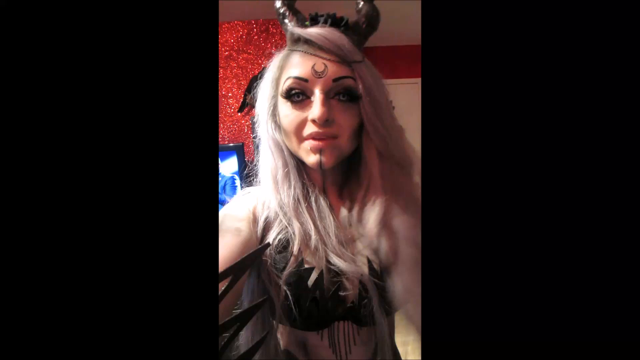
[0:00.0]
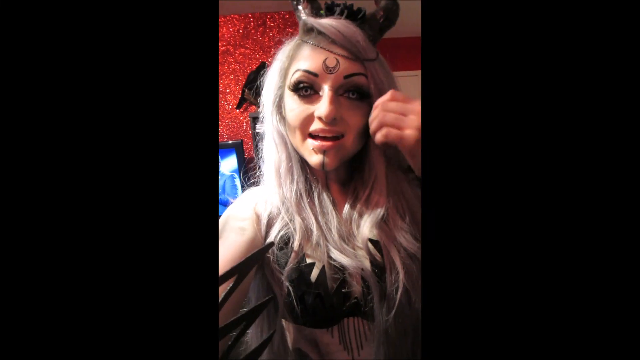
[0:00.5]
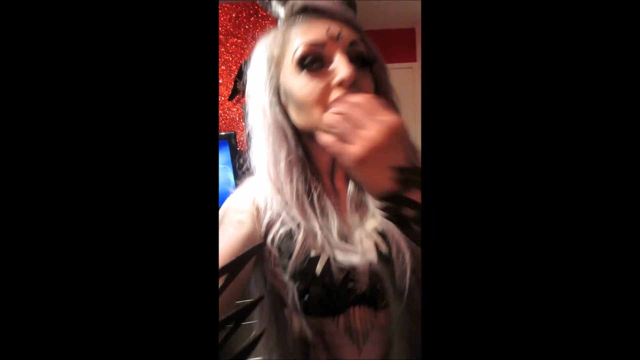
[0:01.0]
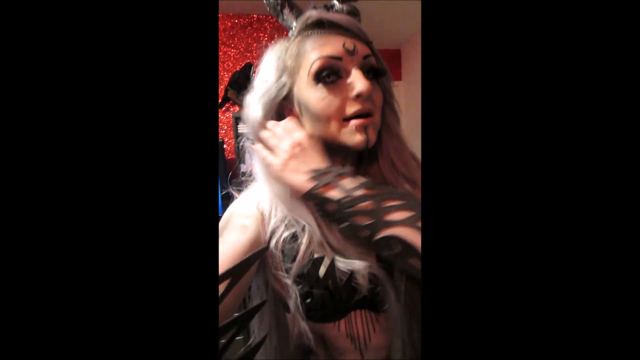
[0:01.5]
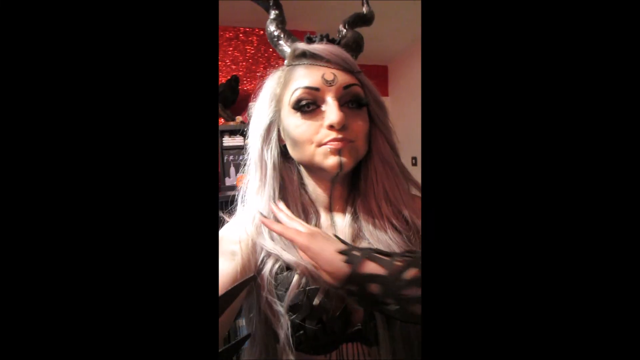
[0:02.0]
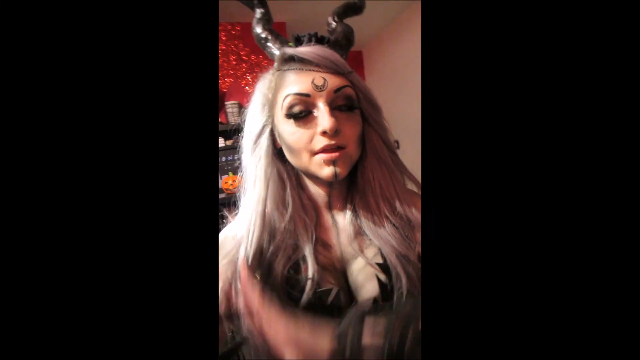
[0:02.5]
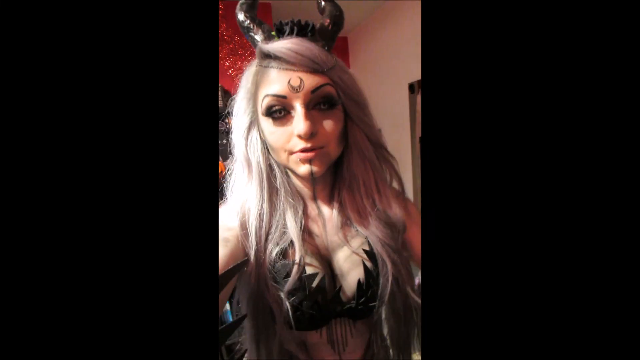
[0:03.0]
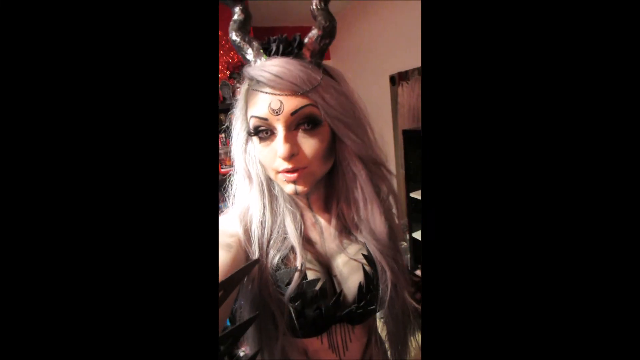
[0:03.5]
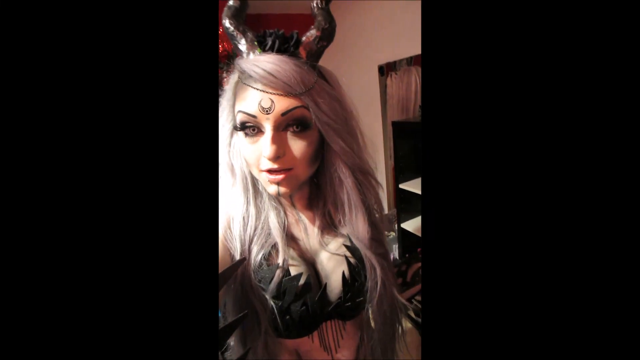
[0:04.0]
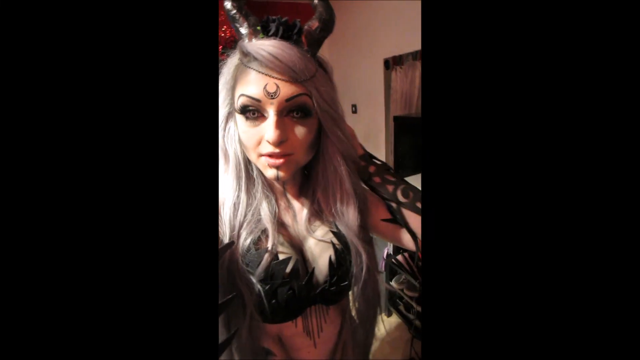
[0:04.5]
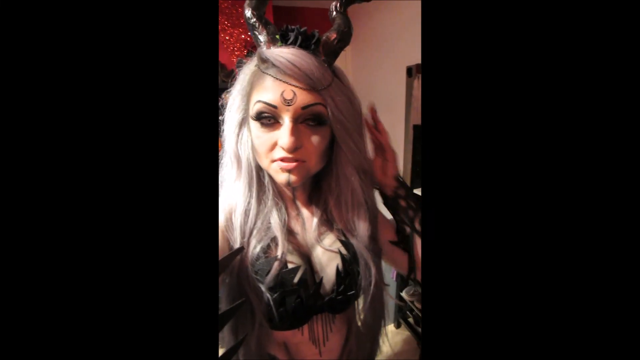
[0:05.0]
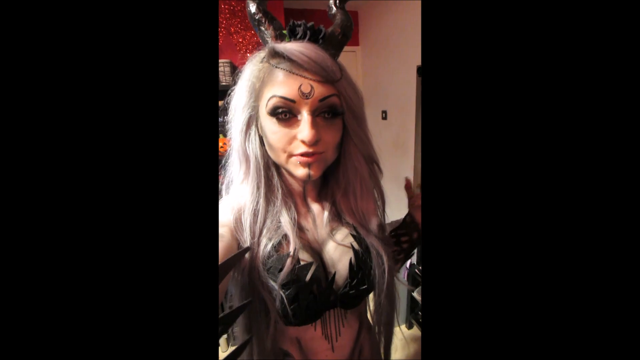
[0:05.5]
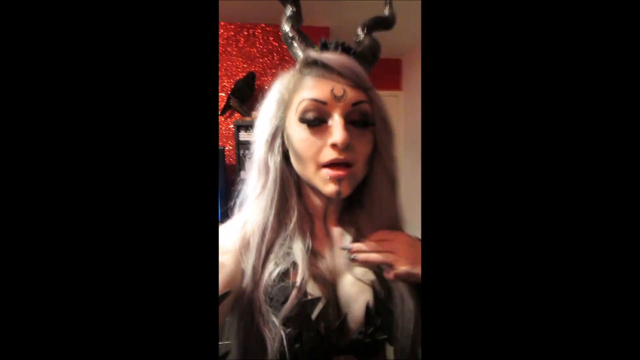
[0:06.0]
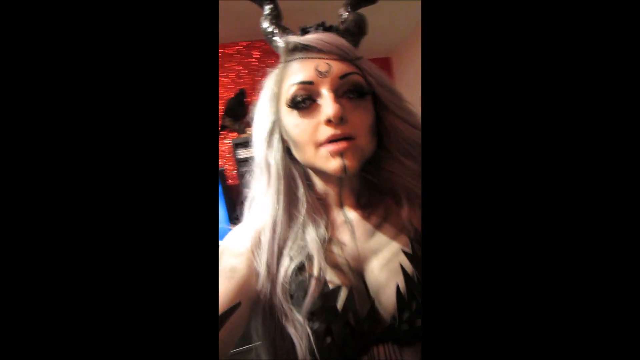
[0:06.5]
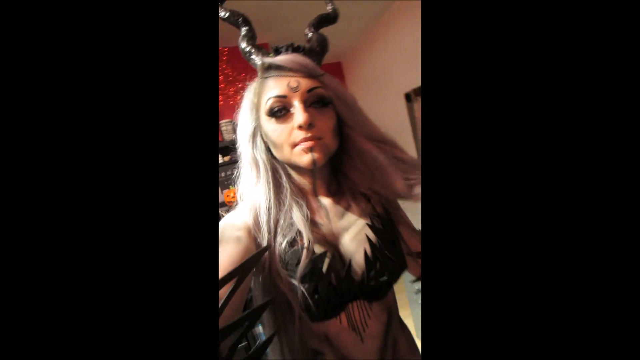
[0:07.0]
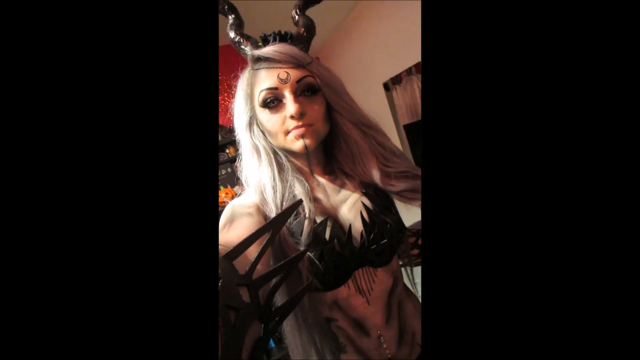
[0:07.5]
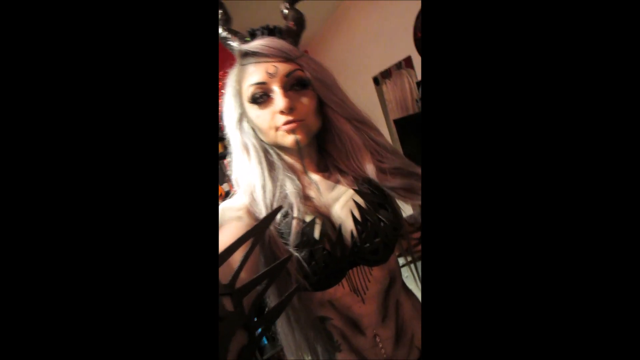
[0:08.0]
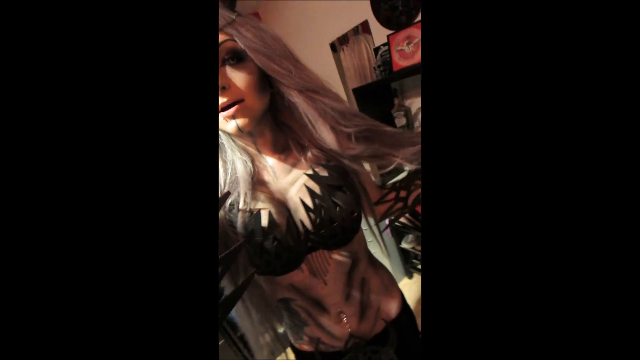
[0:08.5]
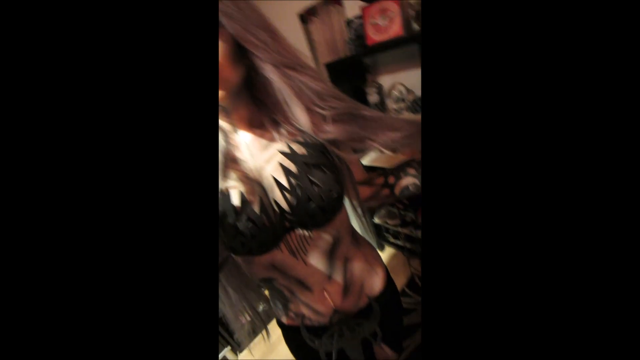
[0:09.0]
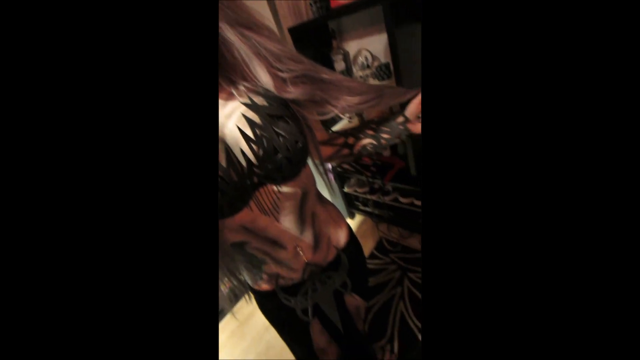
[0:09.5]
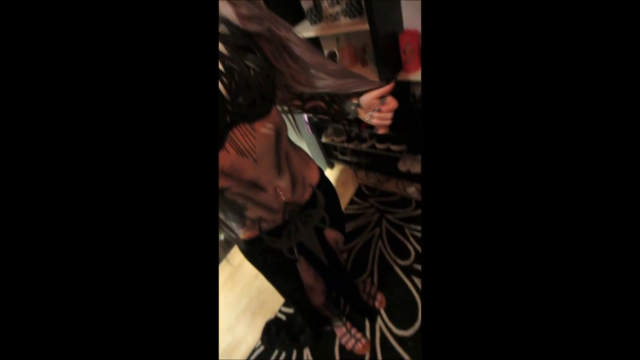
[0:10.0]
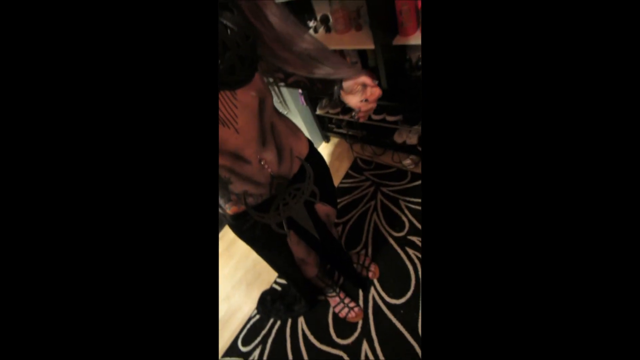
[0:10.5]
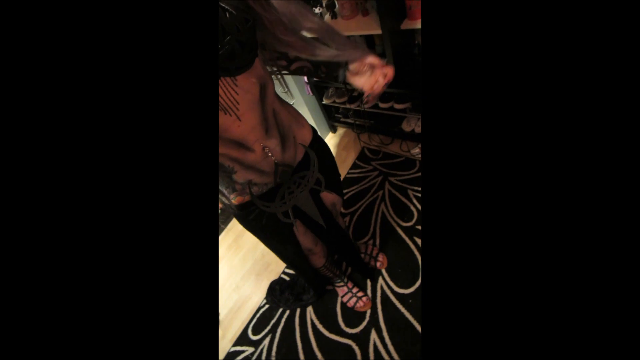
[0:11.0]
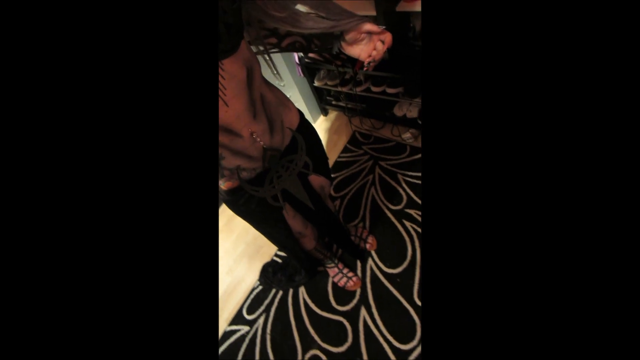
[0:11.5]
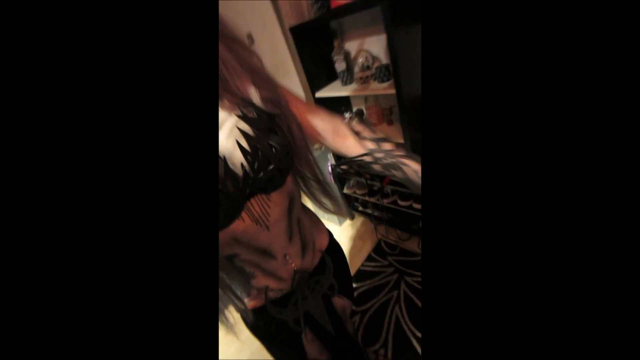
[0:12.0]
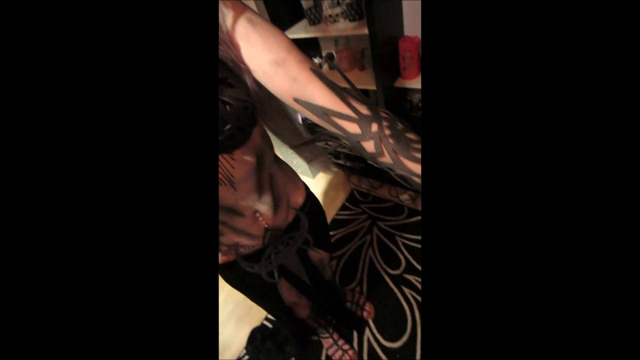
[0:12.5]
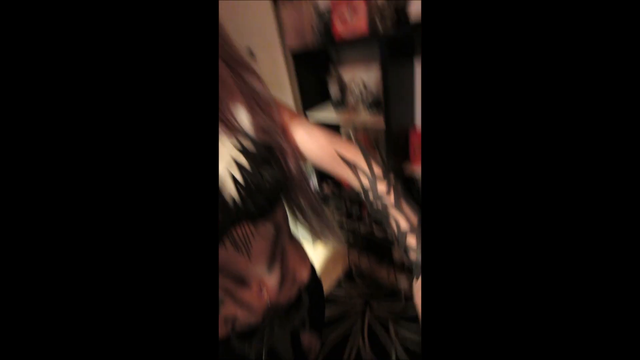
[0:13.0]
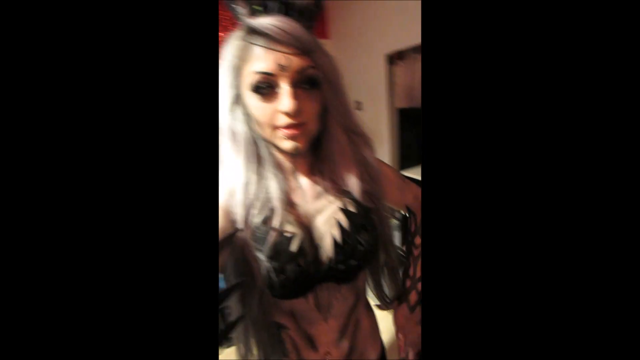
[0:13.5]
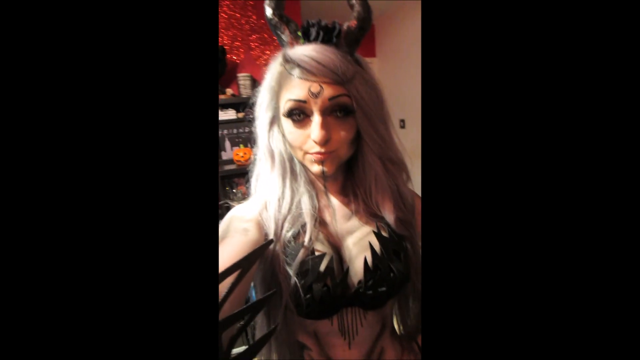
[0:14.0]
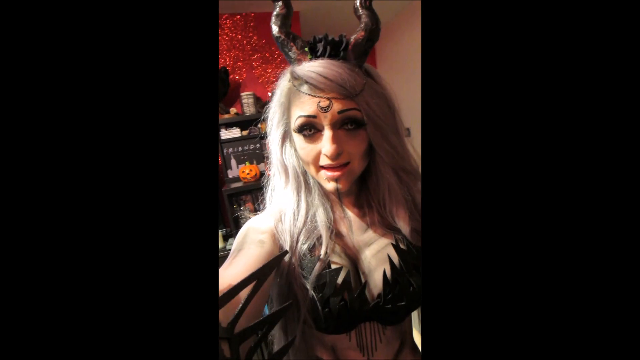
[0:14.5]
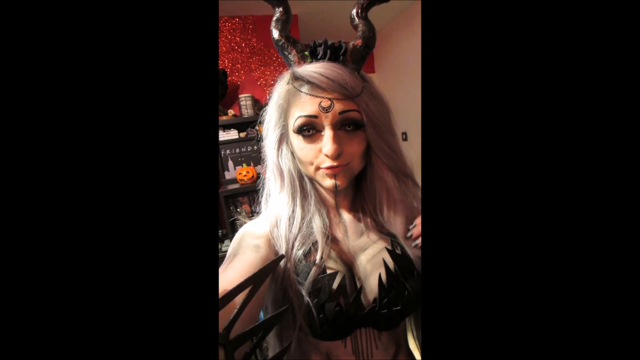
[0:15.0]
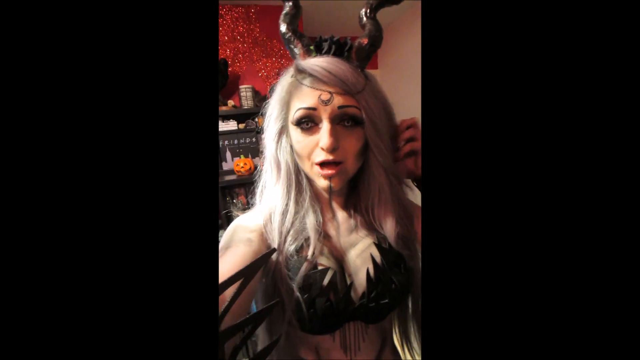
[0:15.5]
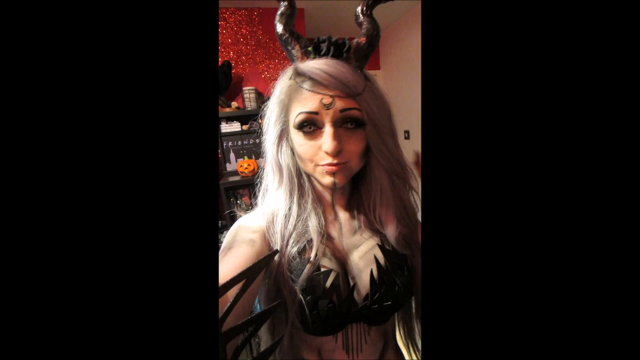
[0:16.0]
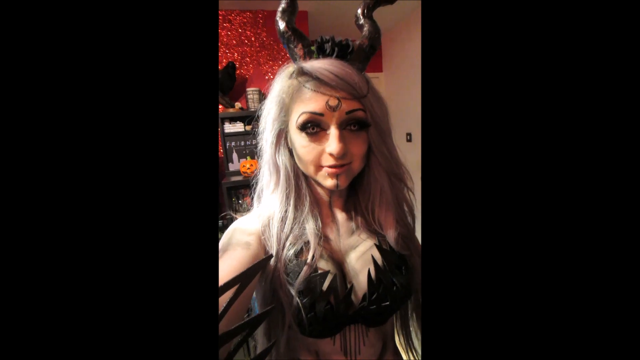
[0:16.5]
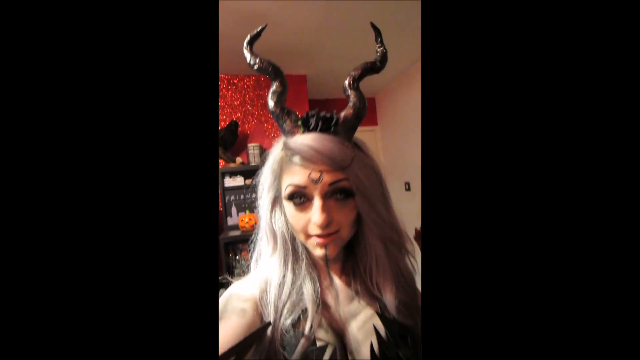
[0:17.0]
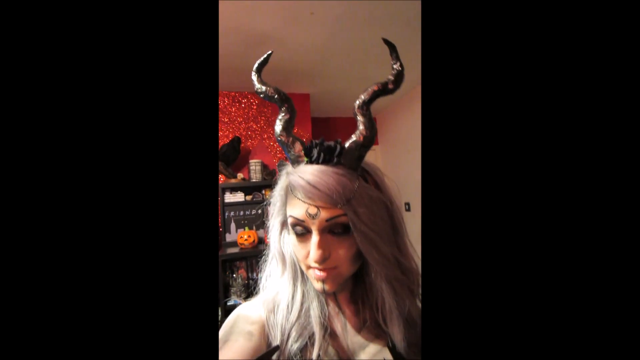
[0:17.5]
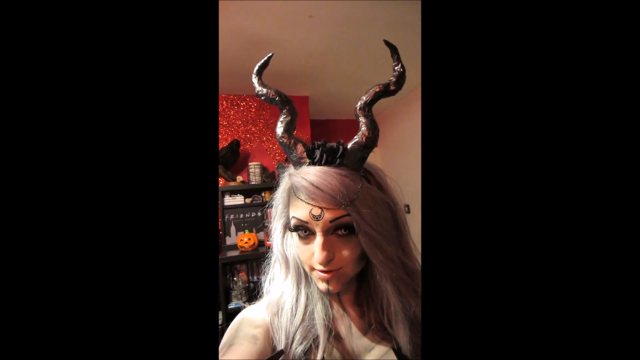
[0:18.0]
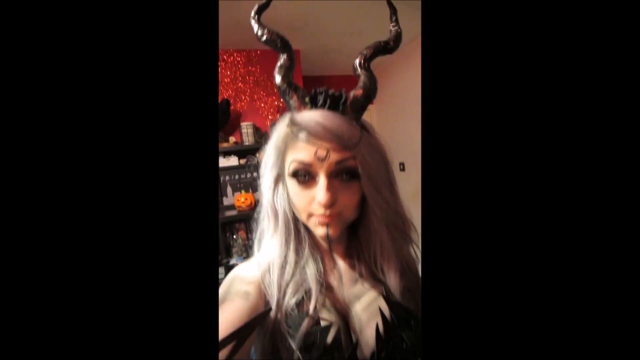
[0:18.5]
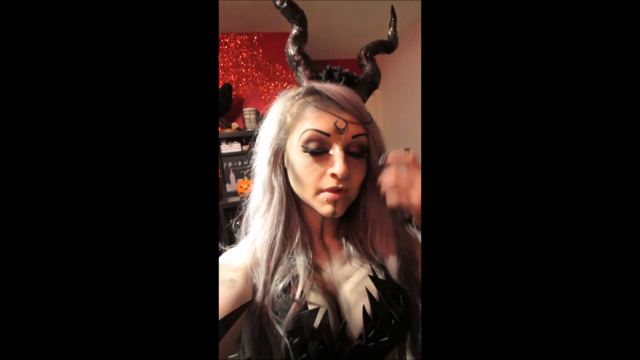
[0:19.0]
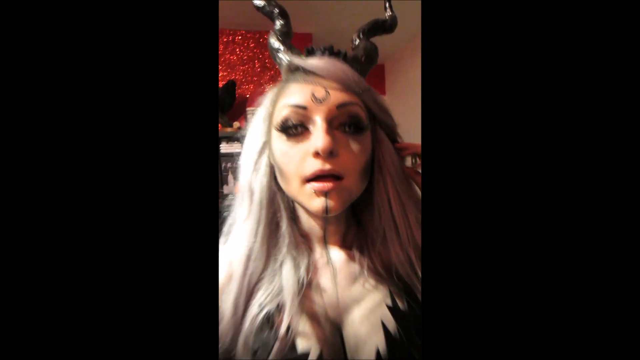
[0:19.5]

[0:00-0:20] The video starts with selfie footage of someone dressed up in makeup with long hair, very intricately dressed. A crescent moon is drawn on their forehead, and there appears to be facial hair drawn on their face, some chin hair and a beard, though it is hard to tell whether these are facial hair or just black marks going down. The video focuses on their outfit as they show it off: a top with spikes coming out of the top of it, gauntlets on their arms, and a long black cloth skirt. On top of their head they have two horns and some sort of black crown in the center. The black marks seem to be there for definition, almost like a cosplay of a character.